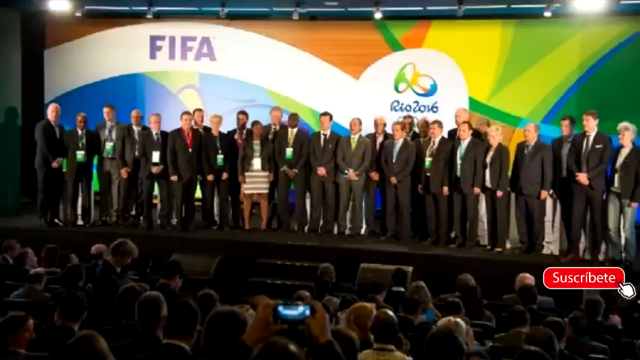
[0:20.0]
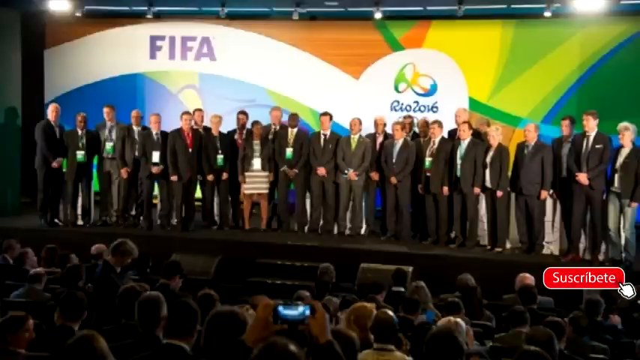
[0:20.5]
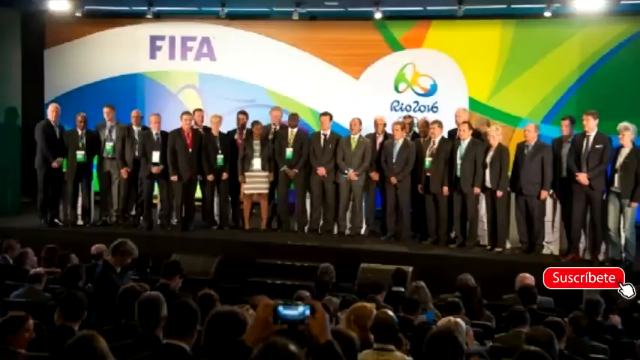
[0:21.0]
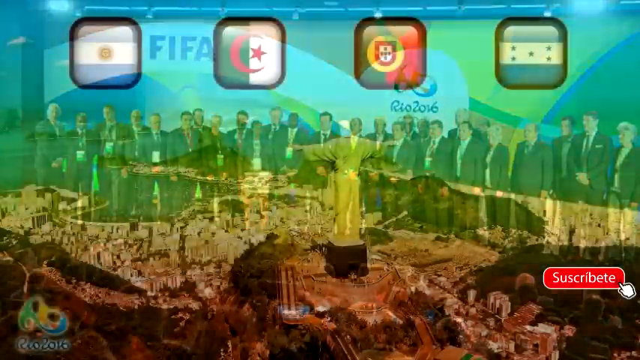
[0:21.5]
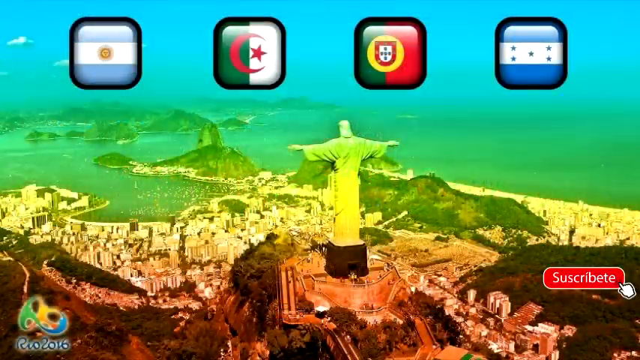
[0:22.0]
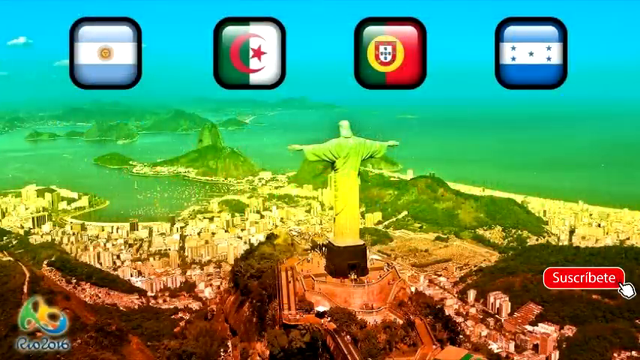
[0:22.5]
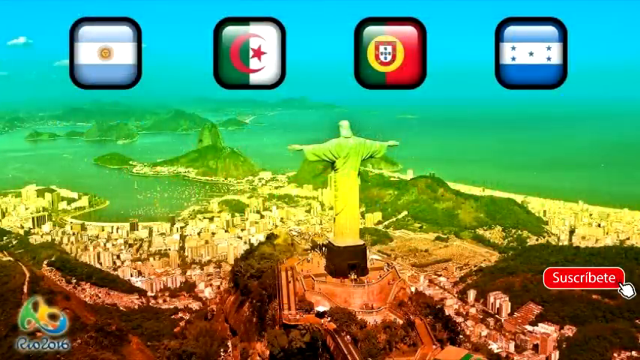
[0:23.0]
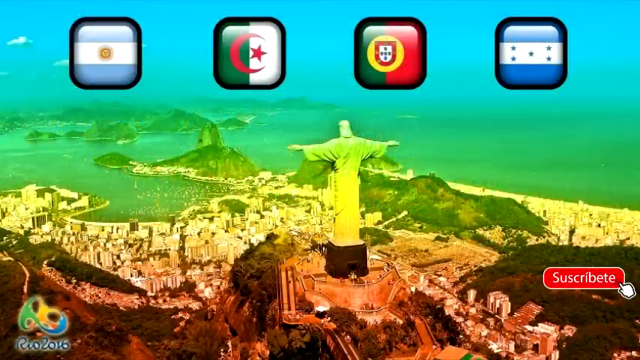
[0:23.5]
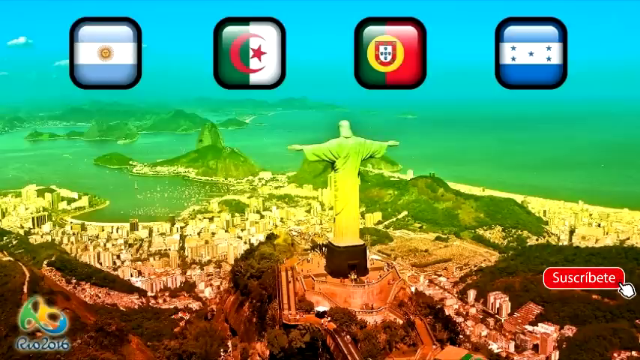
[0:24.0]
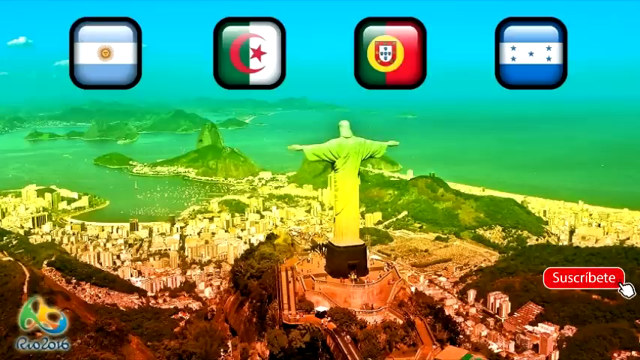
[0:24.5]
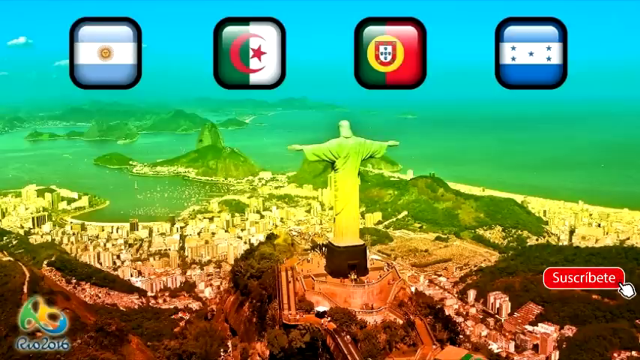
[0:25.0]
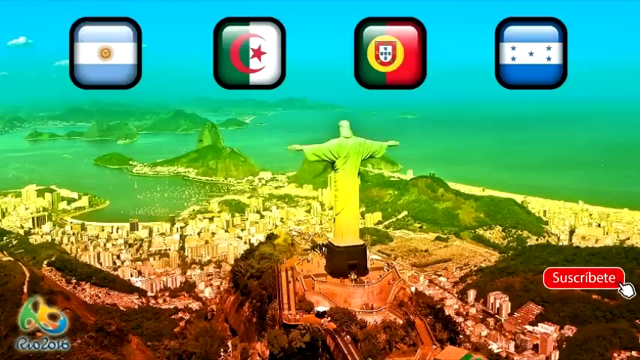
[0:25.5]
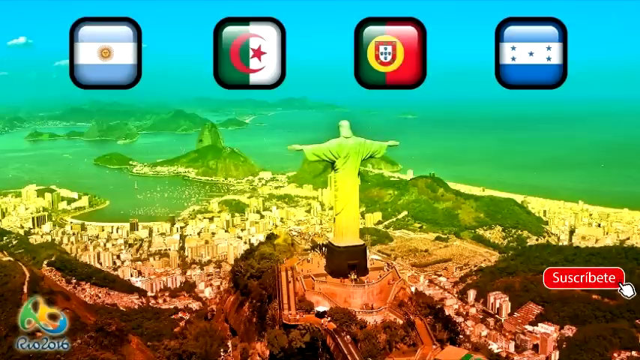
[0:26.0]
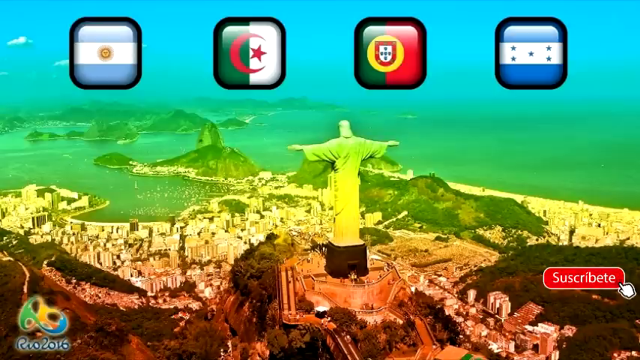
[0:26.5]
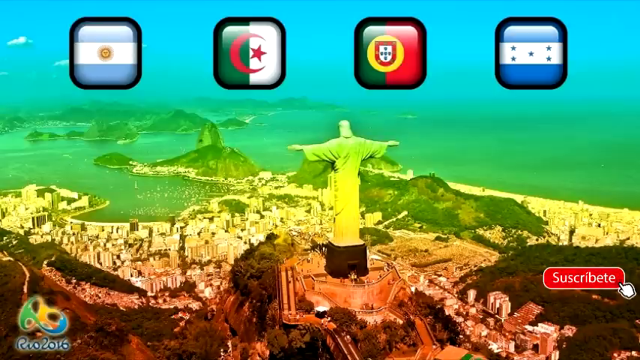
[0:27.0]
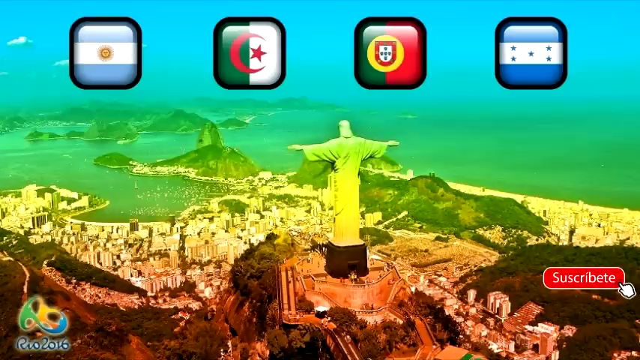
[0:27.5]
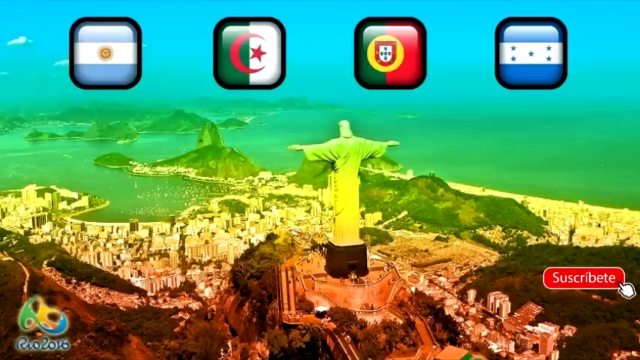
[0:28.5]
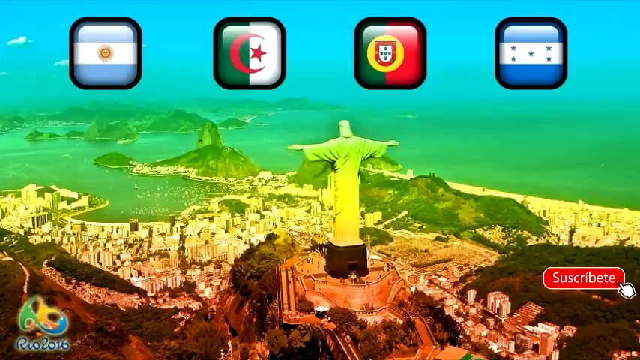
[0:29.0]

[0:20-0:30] About 30 people are on stage with people in the audience, and the text reads "Rio 2016". The scene is very flowing and colorful, and it is a still picture rather than video. Next comes Rio de Janeiro: a giant statue, apparently of Jesus, stands up above, with possibly four different flags. The city is visible down below, along with the ocean and many sailboats. Then "AFA" appears on something like a seal or shield: a gold stripe, a blue stripe, a white stripe and another blue stripe run across it, then a big gold shape with the blue letters "AFA", with what look like leaves surrounding the bottom part.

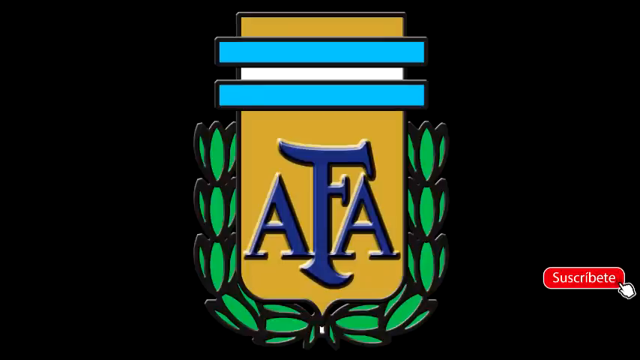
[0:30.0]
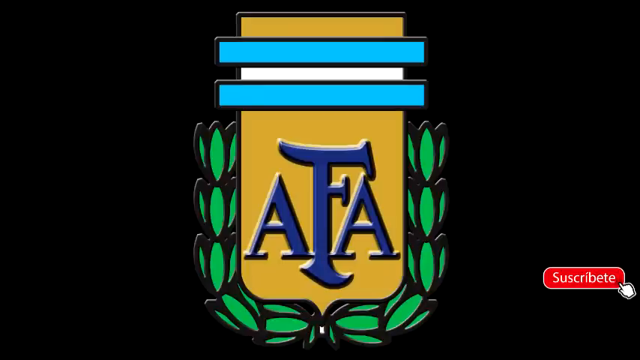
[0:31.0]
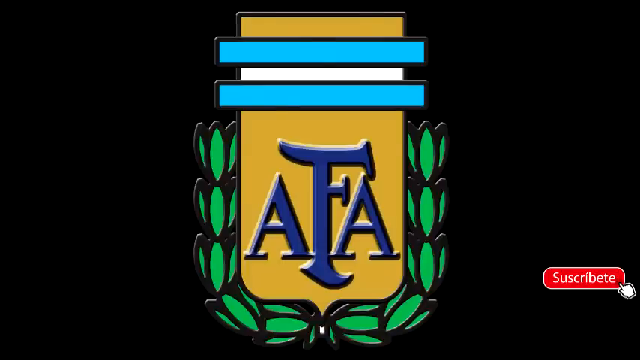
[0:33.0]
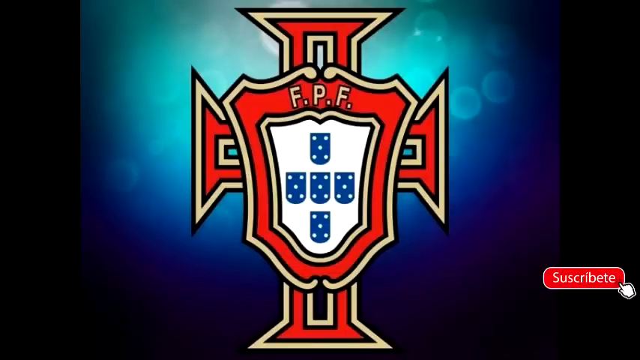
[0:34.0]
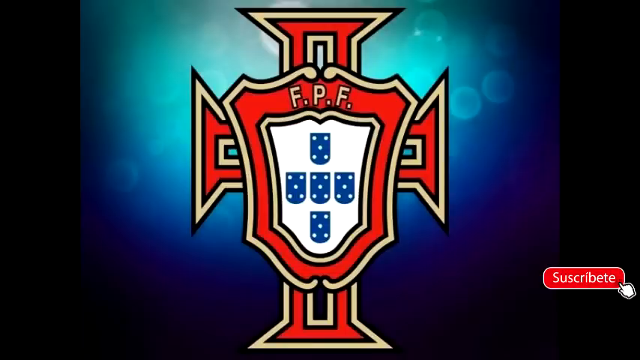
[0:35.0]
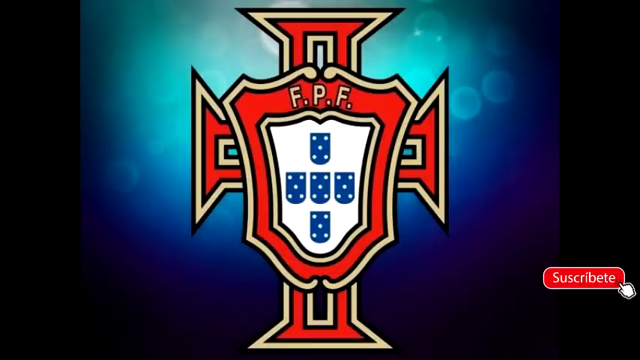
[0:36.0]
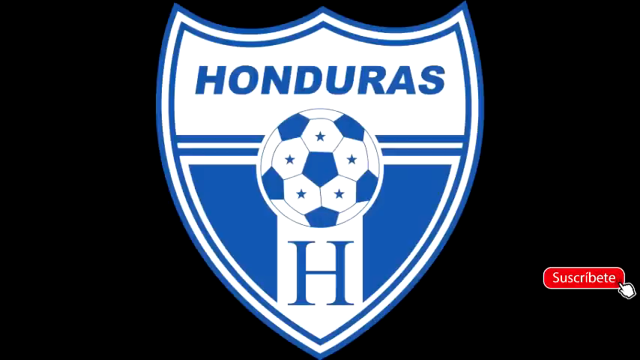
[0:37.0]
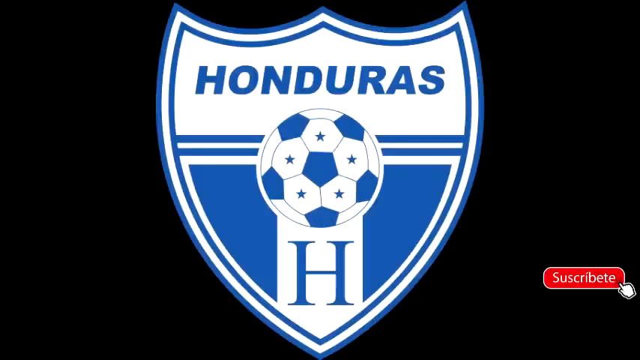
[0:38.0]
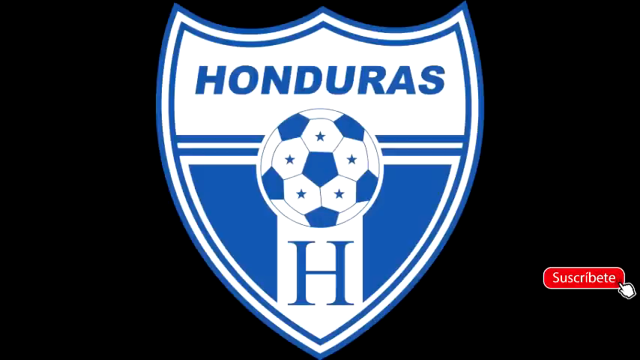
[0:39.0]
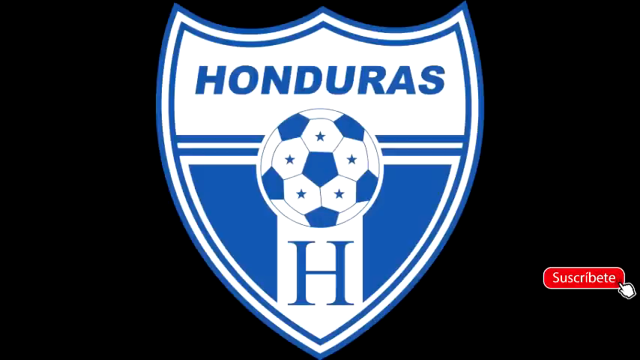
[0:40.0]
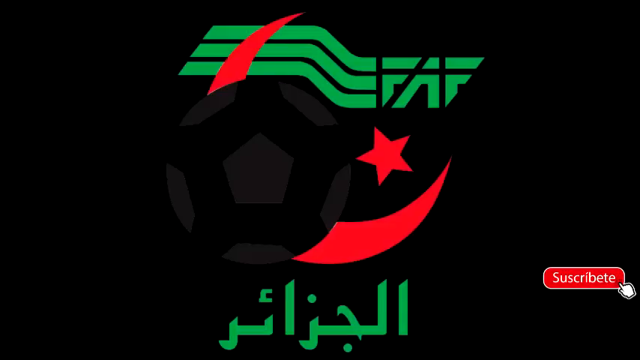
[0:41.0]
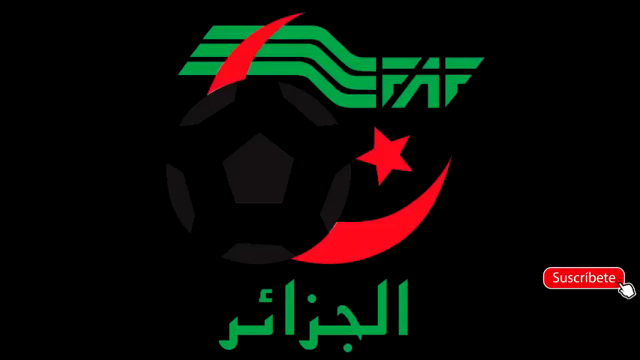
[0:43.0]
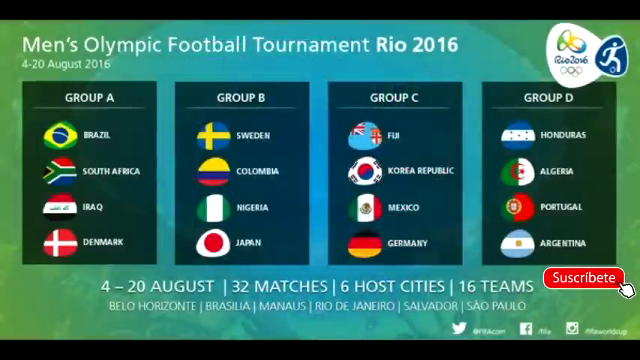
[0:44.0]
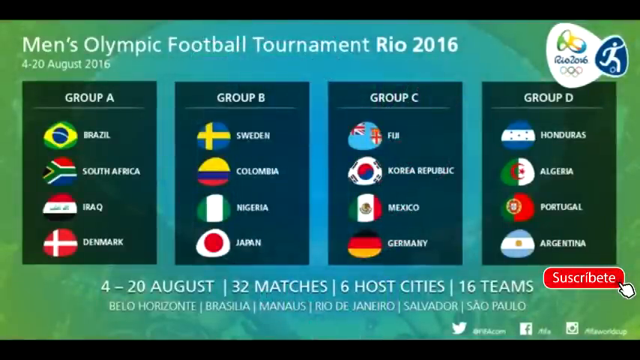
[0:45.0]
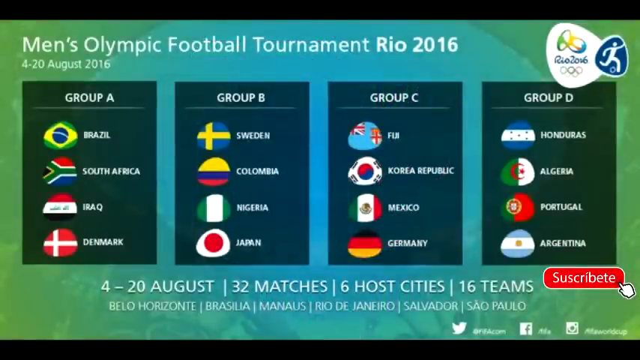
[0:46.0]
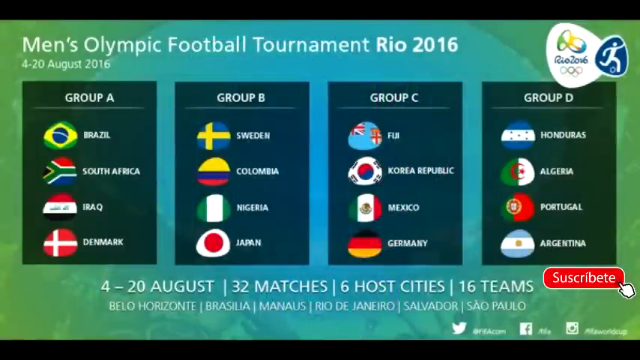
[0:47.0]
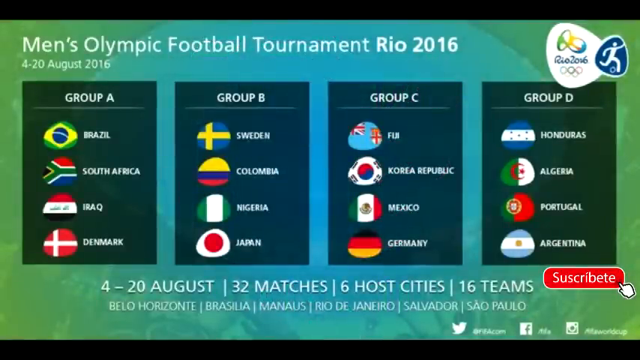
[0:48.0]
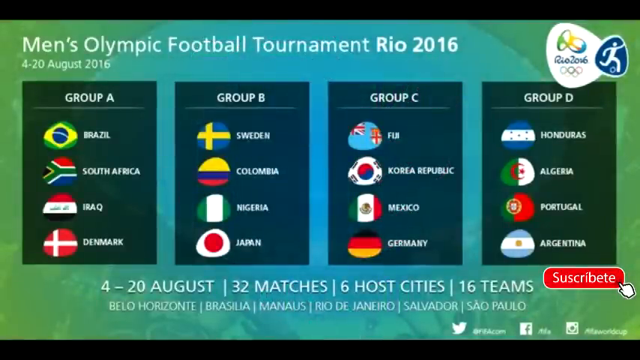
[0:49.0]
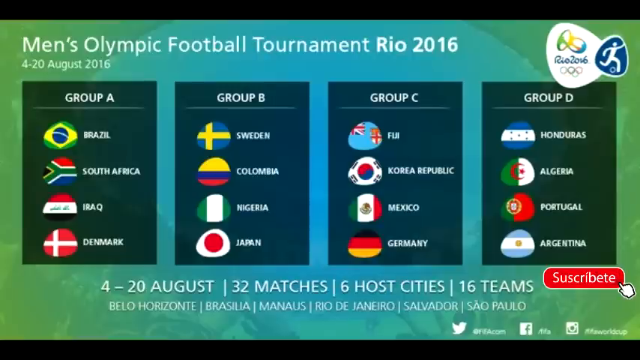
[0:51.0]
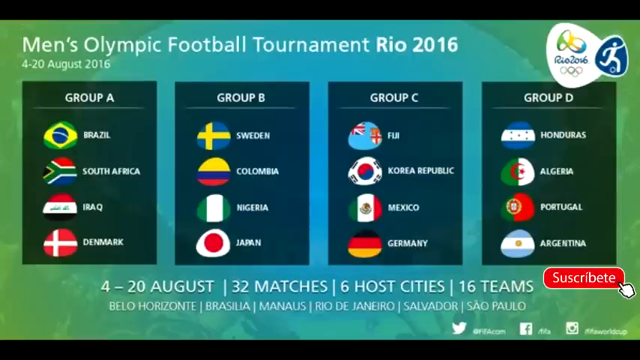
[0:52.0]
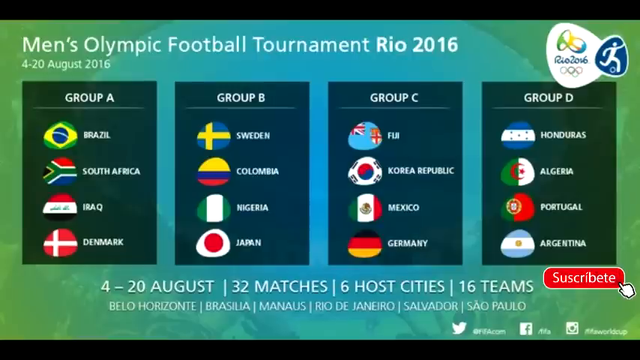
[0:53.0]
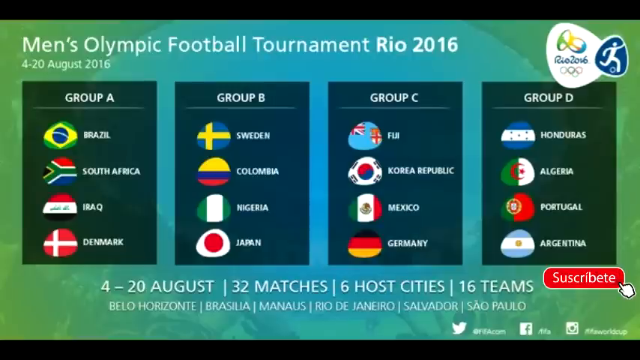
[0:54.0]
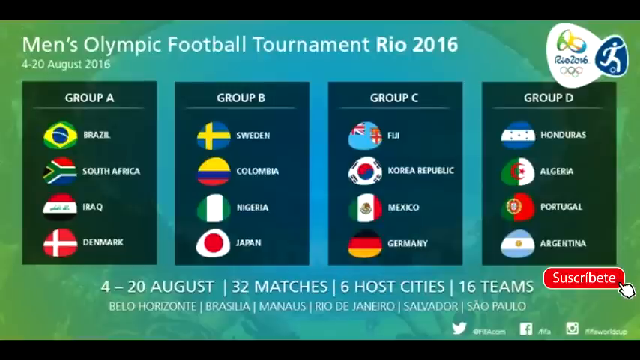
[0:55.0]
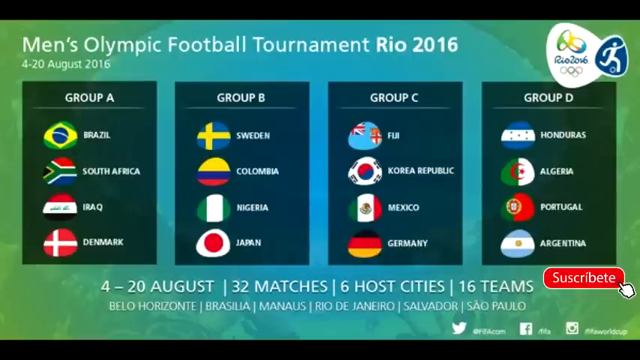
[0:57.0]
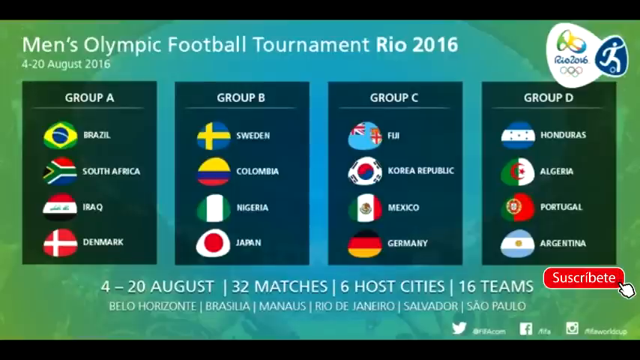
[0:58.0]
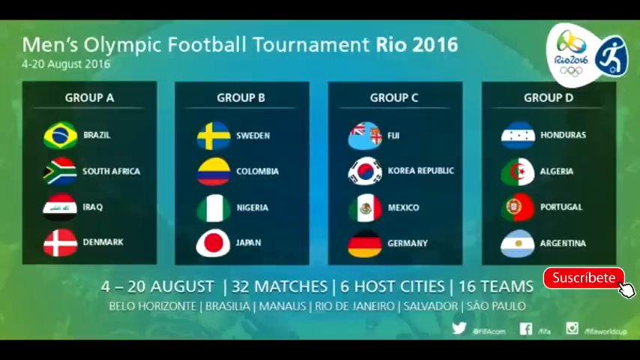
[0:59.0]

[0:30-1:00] The AFA emblem is shown, then a different one, FPF. It looks like five dice or dominoes: one on top, three in the middle and one on the bottom, all showing five pips. There is red around it, with red on the top, pointy red lines on either side and red on the bottom, so the shape almost resembles a person with a head, arms and legs. Next is the Honduras emblem: a big white shield with a blue H, the word "Honduras" in blue, some blue outlines in the background, a mostly white soccer ball with some blue on it, and five little stars. The following one is hard to see: a black soccer ball with some gray, a red moon and a five-sided star, possibly for China. At the top of the moon are three slightly wavy green stripes, and it seems to say "FAF"; at the bottom are unreadable green symbols, possibly in another language. Then a chart appears reading "the Men's Olympic Football Tournament Rio 2016" on a bluish-greenish background. Group A is Brazil, South Africa, Iraq and Denmark; Group B is Sweden, Colombia, Nigeria and Japan; Group C is Fiji, Korea Republic, Mexico and Germany; Group D is Honduras, Algeria, Portugal and Argentina. It lists August 4 to the 20, 32 matches, six host cities and 16 teams.